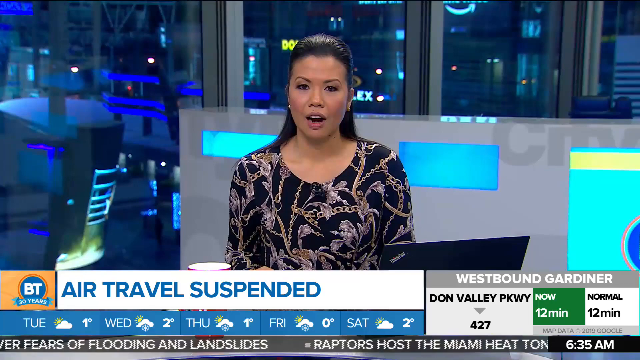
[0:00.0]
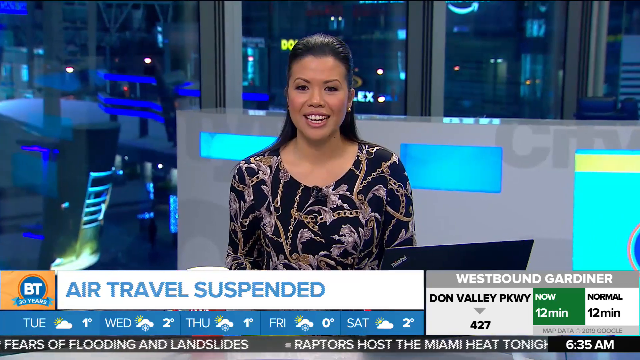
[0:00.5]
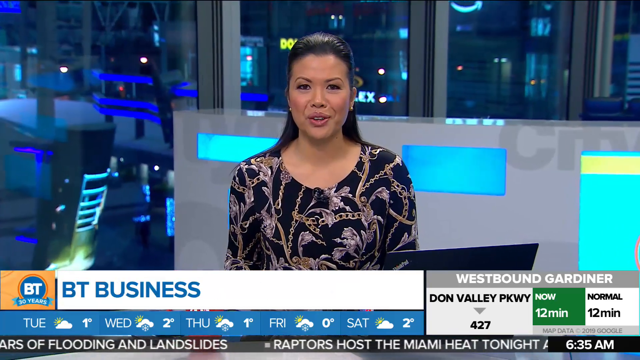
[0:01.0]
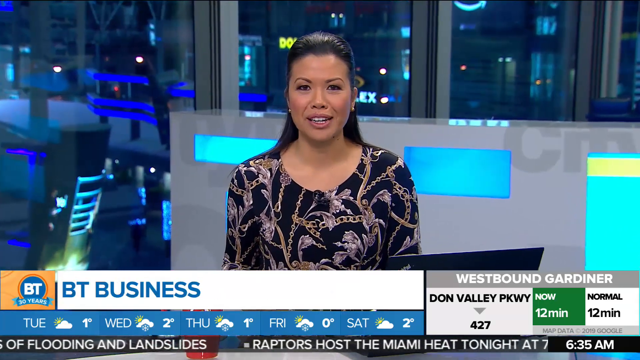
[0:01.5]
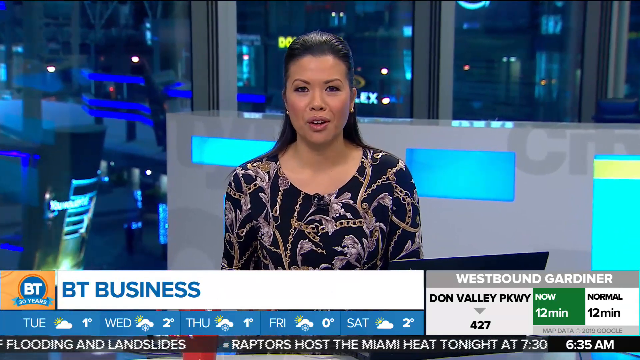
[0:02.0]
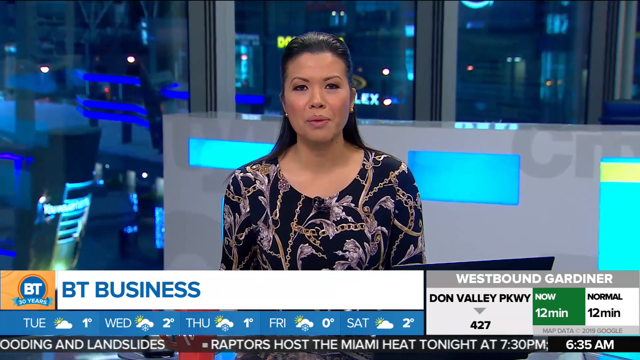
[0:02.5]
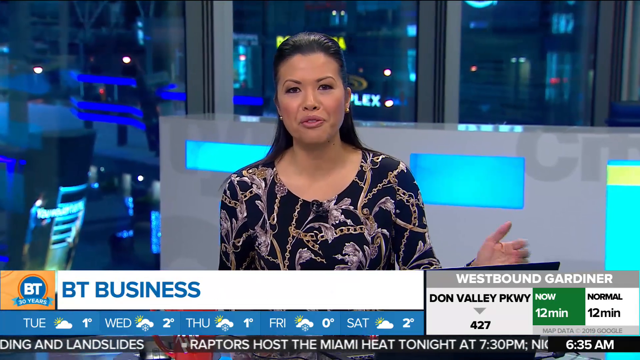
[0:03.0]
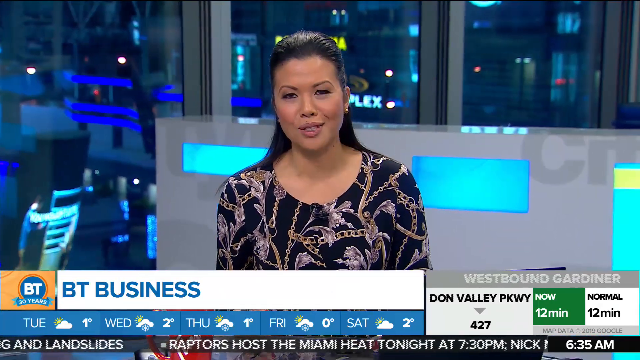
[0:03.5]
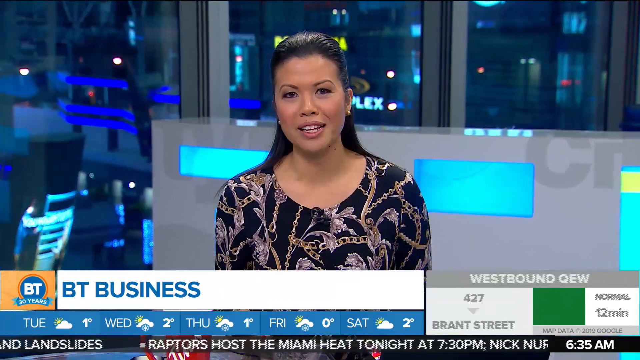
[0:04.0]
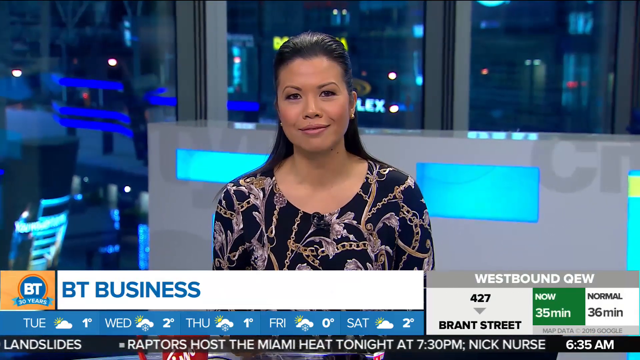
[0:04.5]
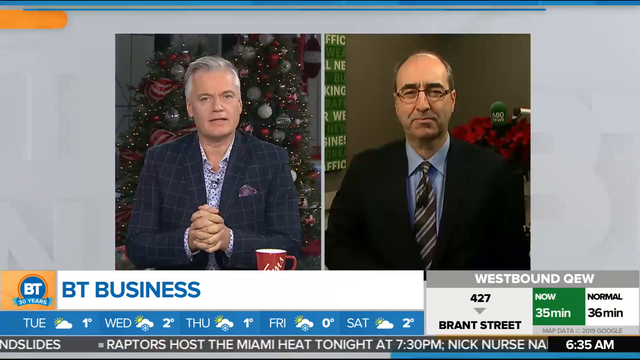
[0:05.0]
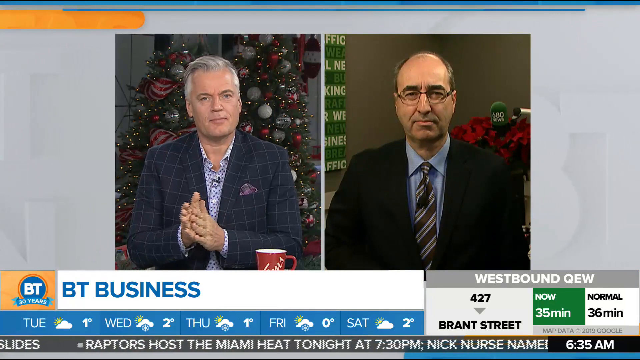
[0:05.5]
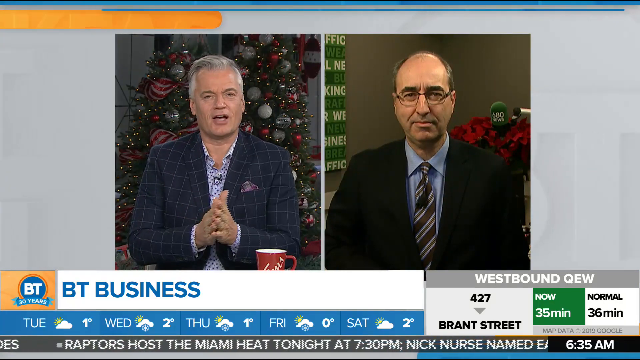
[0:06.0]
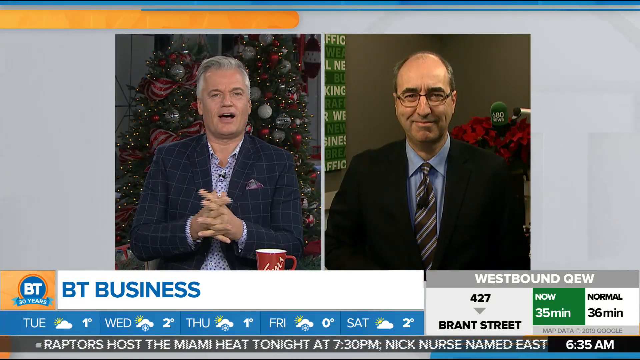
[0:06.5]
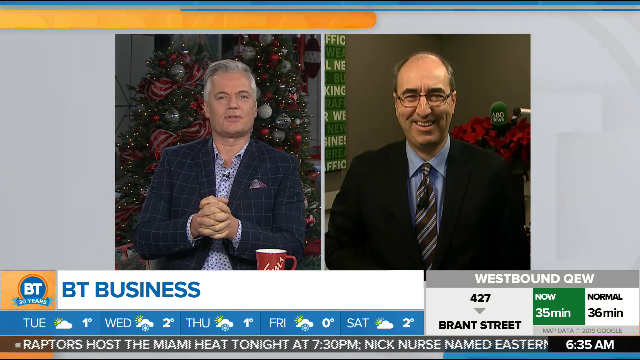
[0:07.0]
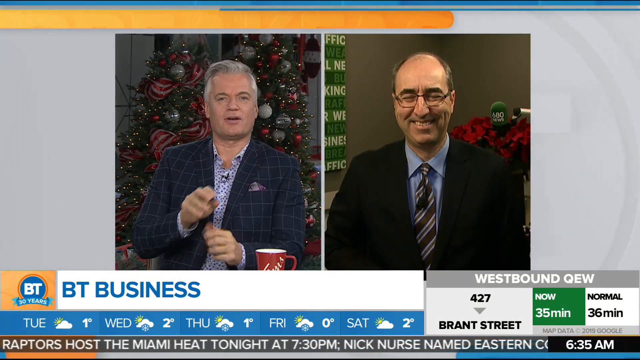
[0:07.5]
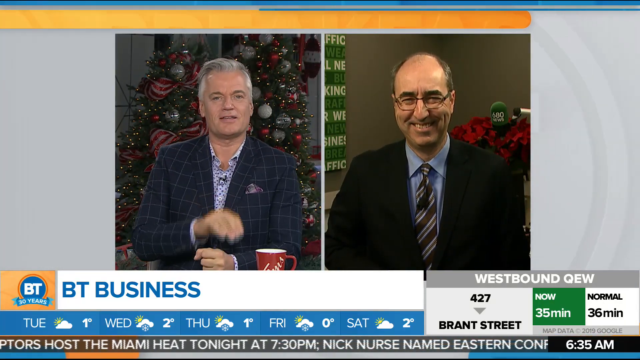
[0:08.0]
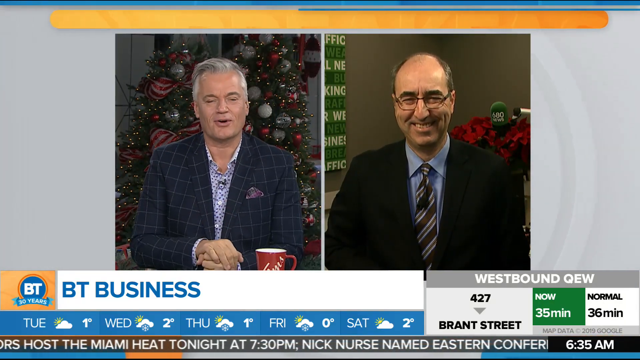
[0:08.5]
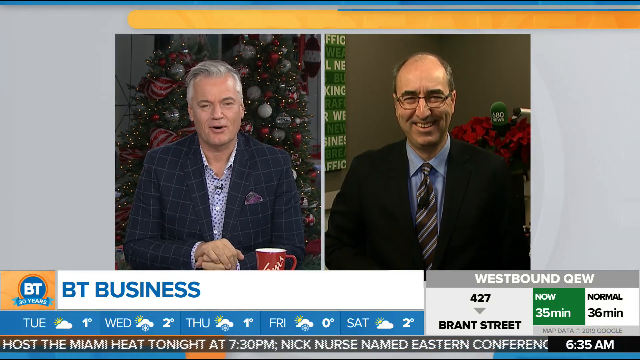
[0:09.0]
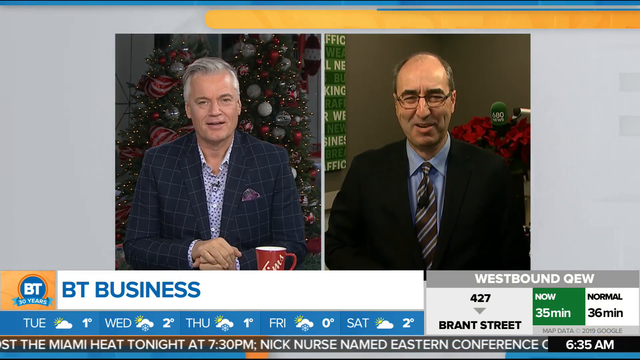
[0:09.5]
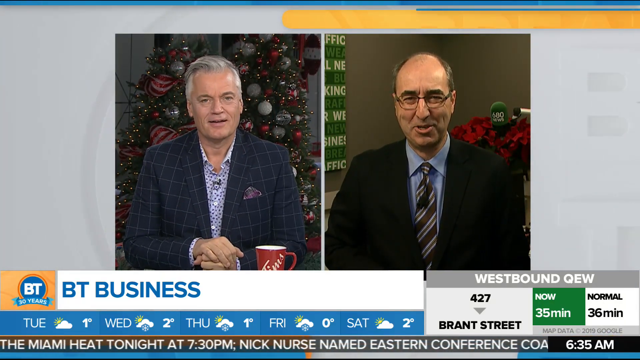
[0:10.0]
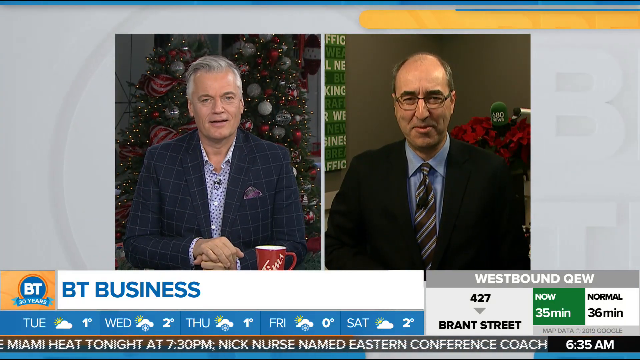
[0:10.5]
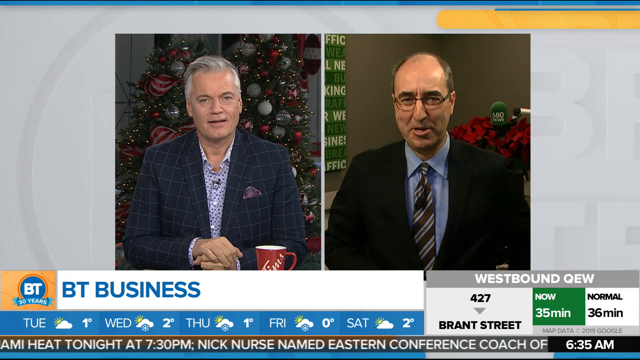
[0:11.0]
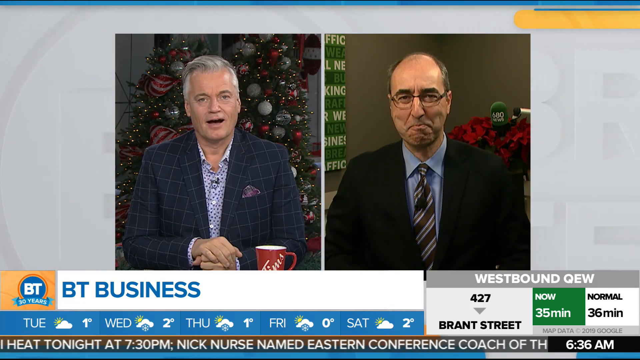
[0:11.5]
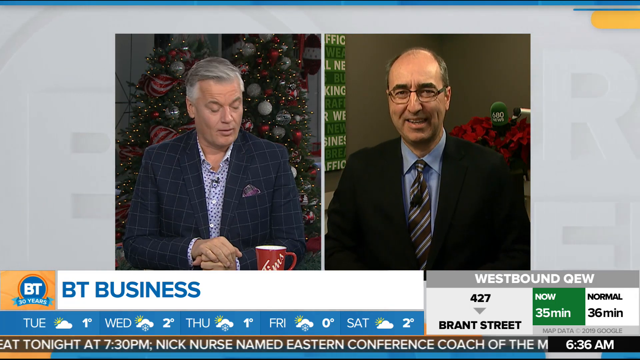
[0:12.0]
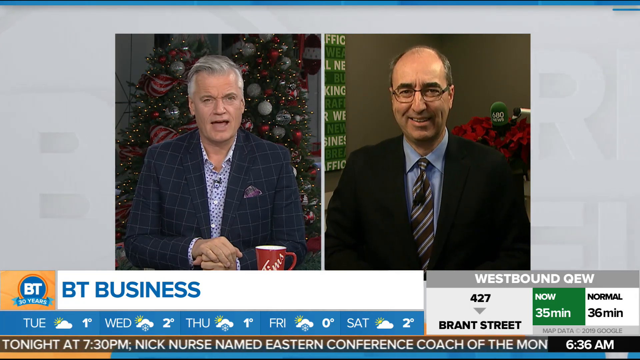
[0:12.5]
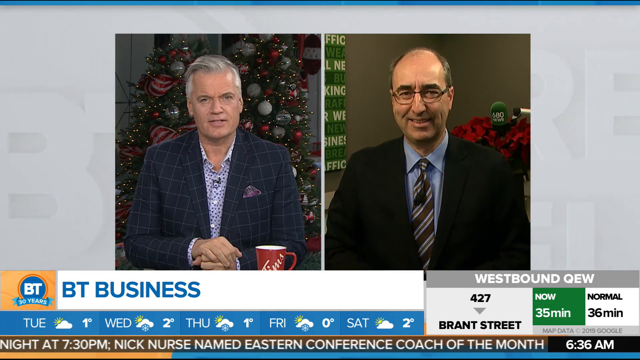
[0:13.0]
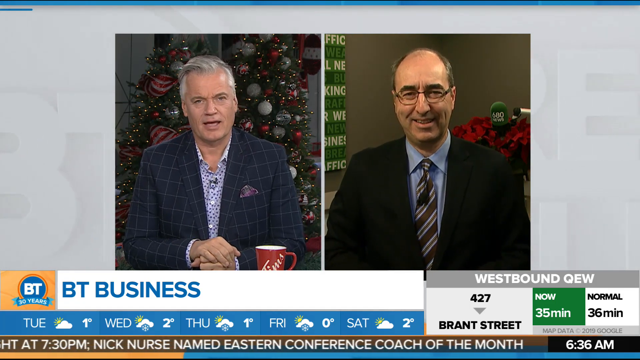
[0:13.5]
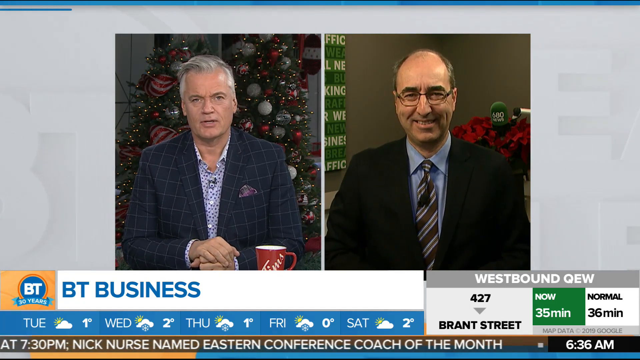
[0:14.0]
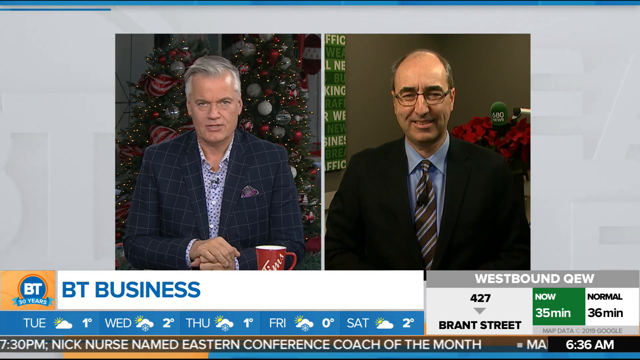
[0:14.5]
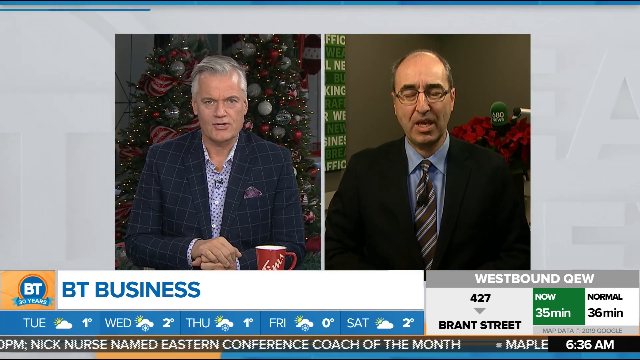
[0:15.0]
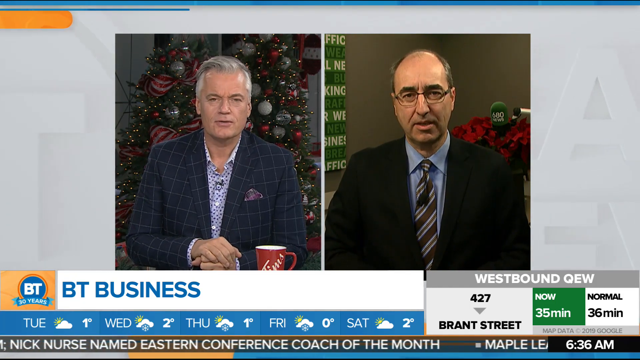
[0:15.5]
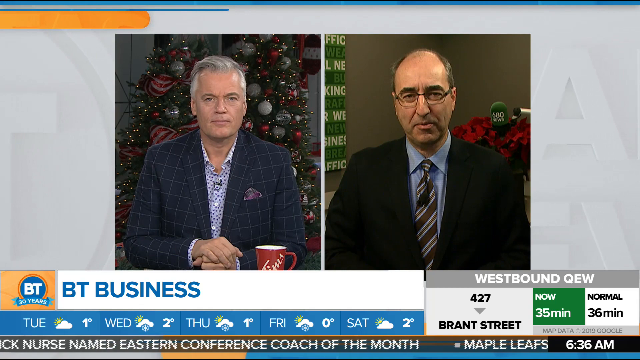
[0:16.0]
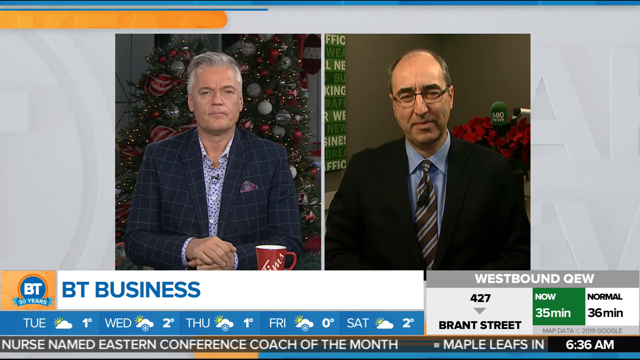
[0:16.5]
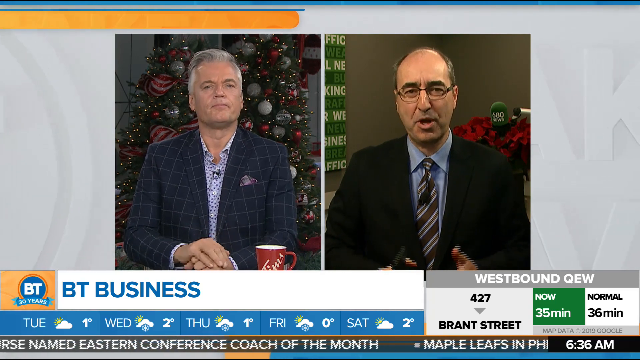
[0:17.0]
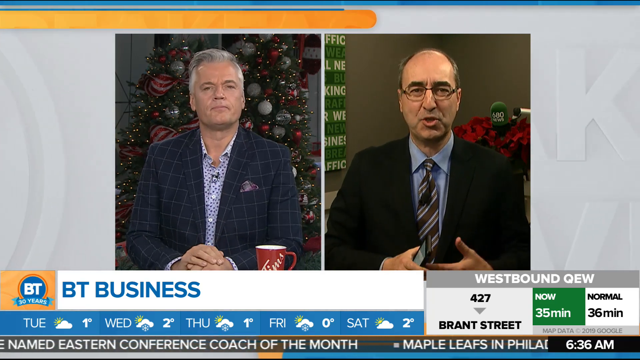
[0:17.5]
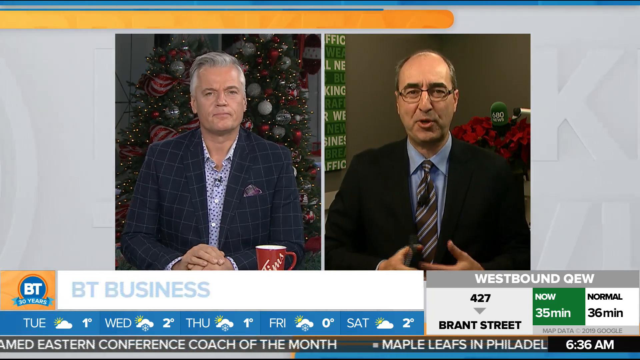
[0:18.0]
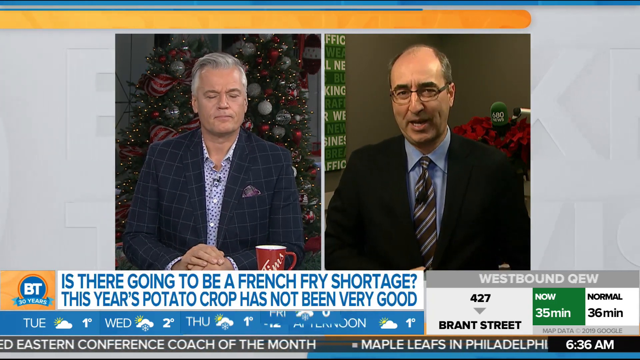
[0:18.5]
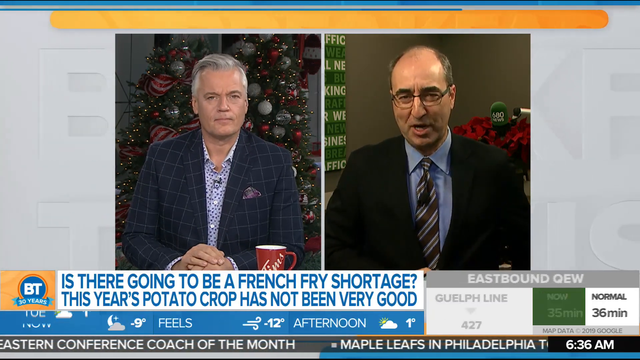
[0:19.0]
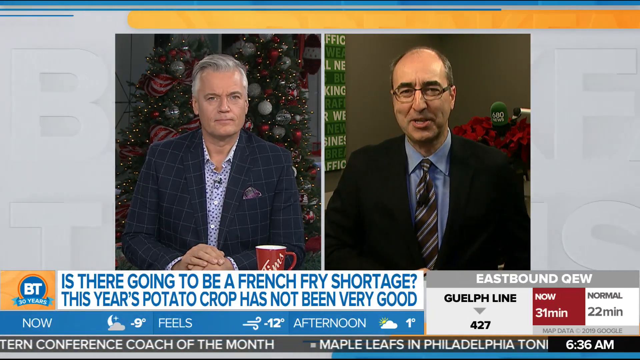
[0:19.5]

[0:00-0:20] A news program shows an Asian female newscaster with black hair that is combed and falls behind her neck. She wears a black dress with light purple flowers and golden chains running all across it. Behind her, a row of windows looks out onto a city, with buildings in the background. Below her is a news graphic: in the bottom left, the letters "BT" are in a blue circle with a red circle around it, and a blue banner beneath reads "30 years." To the right, a white rectangle reads "air travel suspended." At the bottom of the screen, a blue rectangle shows the forecast from Tuesday to Saturday. On the right side, a box reads "westbound Gardener," and below the white box another box reads "Dan Valley Parkway" with an arrow pointing down and the number "427." To the right, a green box reads "now" with "12 minutes" beneath it, and further right the word "Normal" is in a white box with "12 minutes" below. The newscaster talks, raises her left hand with the palm facing the ceiling, and brings it back down. The shot changes to a split screen on a gray background showing two men talking, seen from the stomach up. The man on the right appears to be in his early 50s, with gray hair combed to his right side. He wears a black suit with white stripes and a white shirt with what appear to be black dots, and he is sitting in front of a Christmas tree. As he talks, he rubs his hands together in front of him, clasps his fingers together, and then sets his right hand on his left hand, which is in a fist resting on a table. Both men talk. At the top of the screen, a curved yellow bar moves quickly across, and a thinner blue bar moves slowly from left to right.